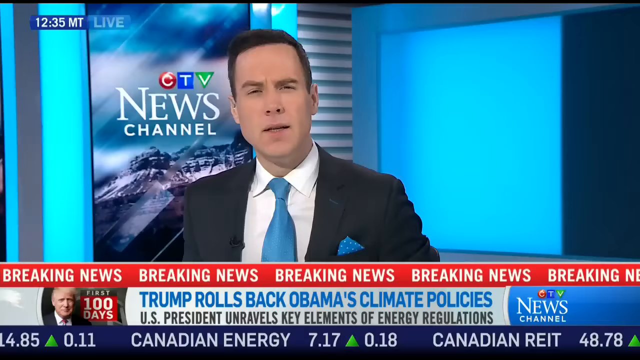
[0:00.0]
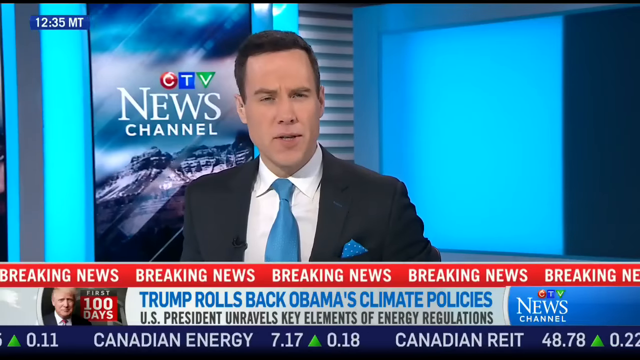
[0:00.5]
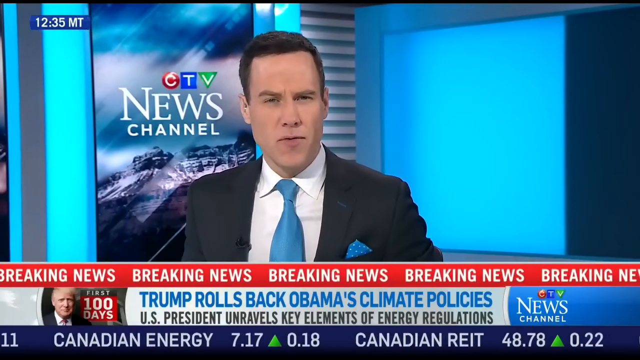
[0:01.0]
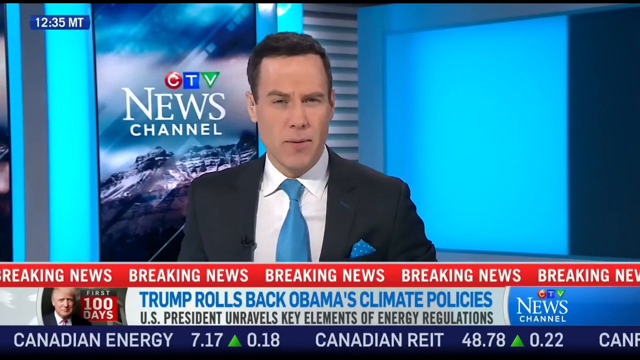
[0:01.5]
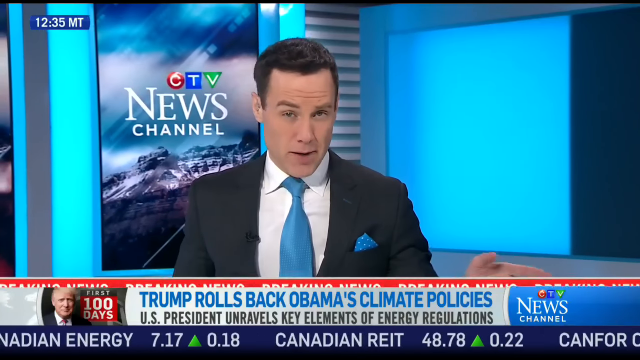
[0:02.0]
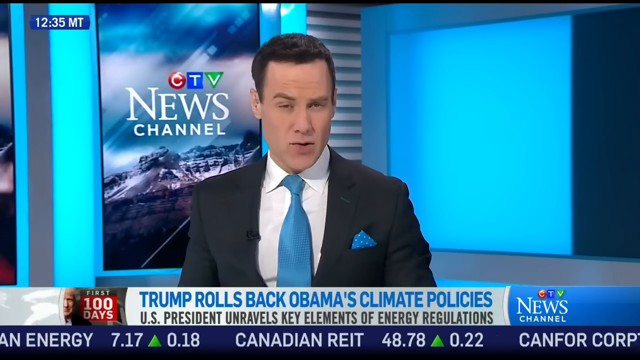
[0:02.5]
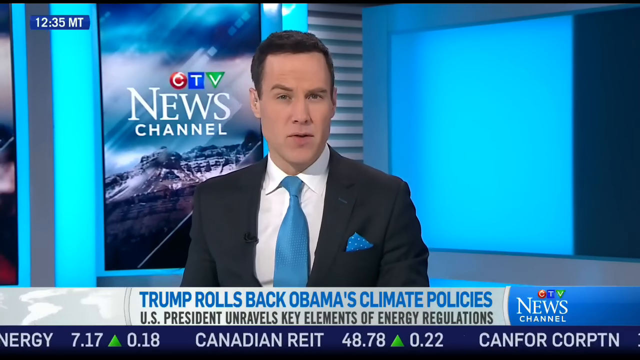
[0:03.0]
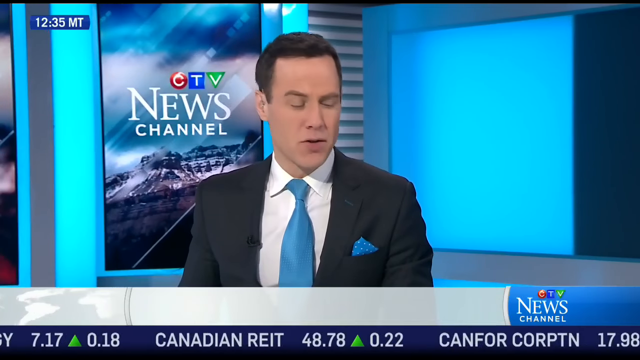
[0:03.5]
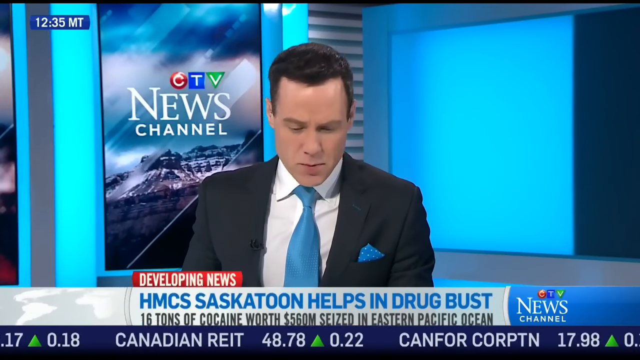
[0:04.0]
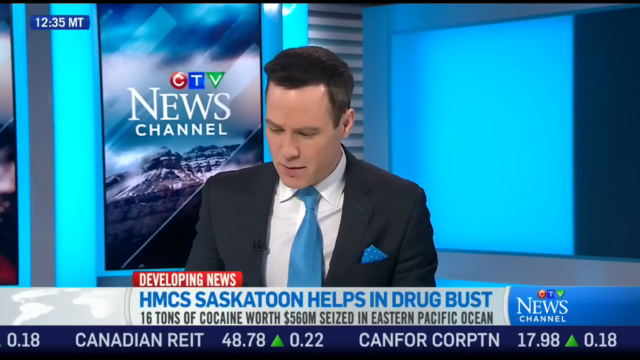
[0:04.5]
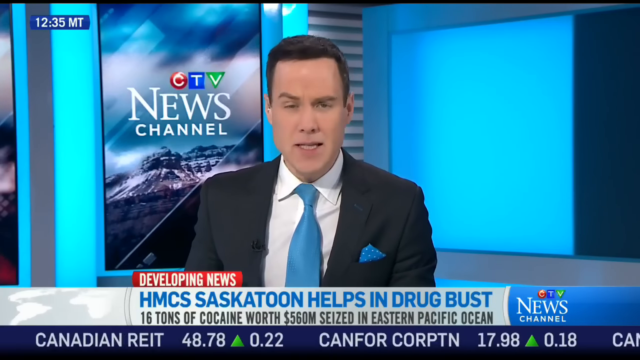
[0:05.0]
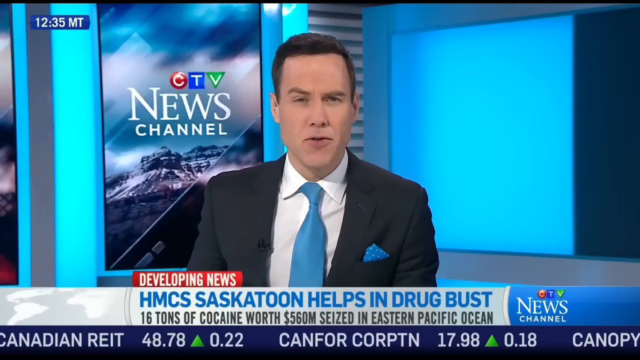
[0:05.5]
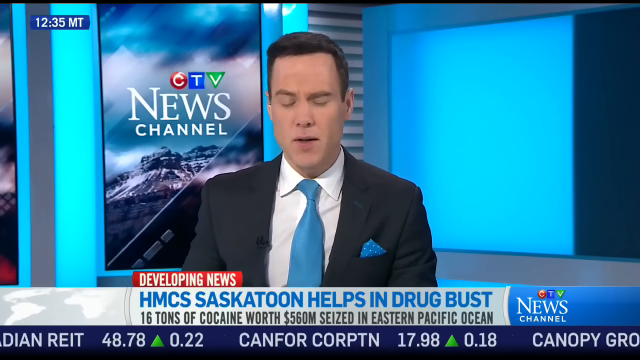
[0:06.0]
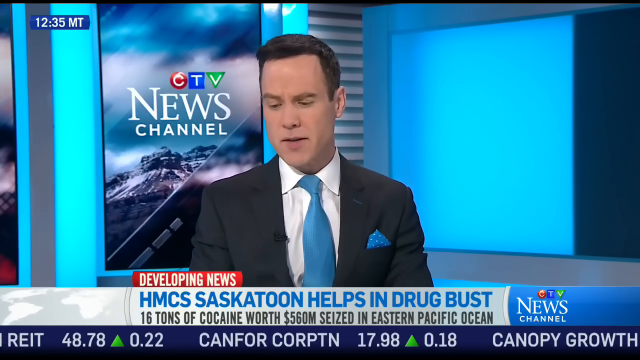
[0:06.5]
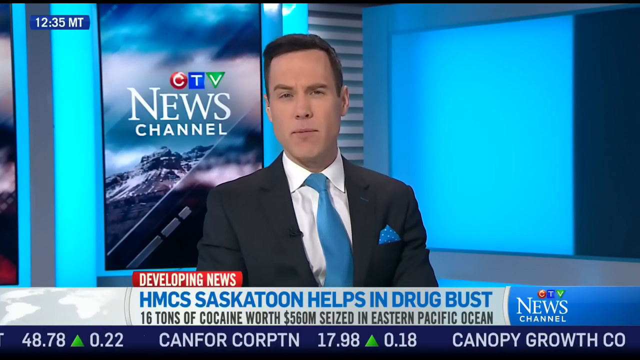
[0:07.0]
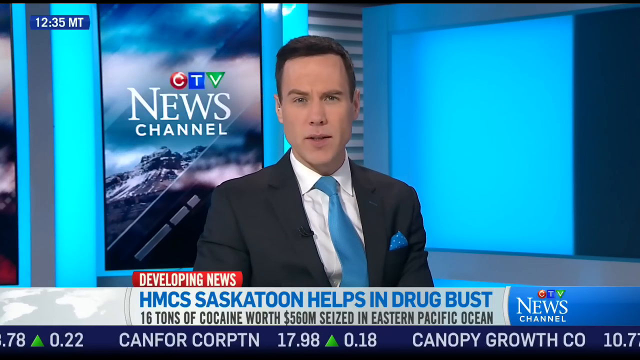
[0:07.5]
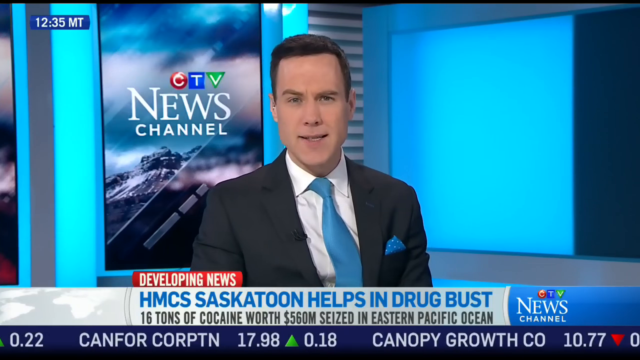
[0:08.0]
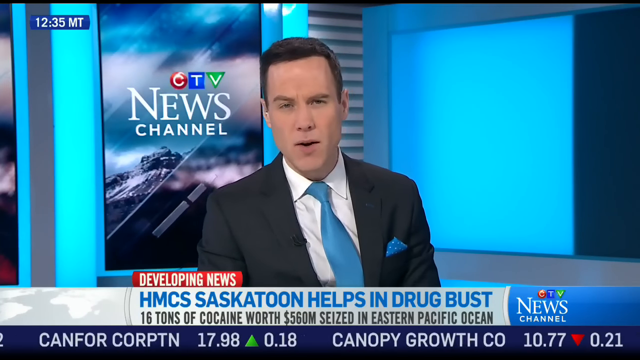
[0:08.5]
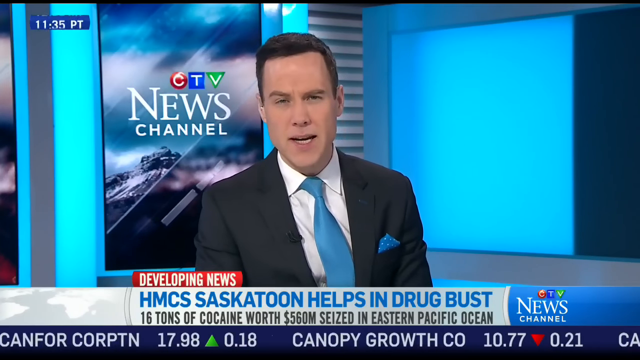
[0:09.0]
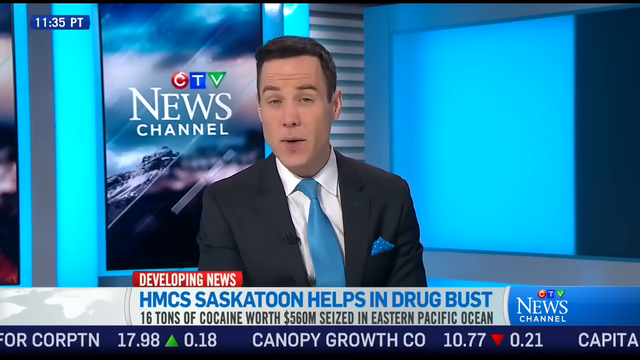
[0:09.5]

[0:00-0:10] The video is from the CTV news channel, with an anchorman in the front. He is white with short hair and wears a white shirt, a blue tie, a blue handkerchief and a black suit top. A breaking news banner reads "Trump rolls back Obama's climate policies" and "U.S. president unravels key elements of energy regulations" while the anchor talks. The time at the top left is 12:35 Mountain Time, and stock tickers run along the bottom, showing Canadian Energy up, Canadian REIT up and Canfor Corp TN up, which suggests this is apparently a Canadian news station.